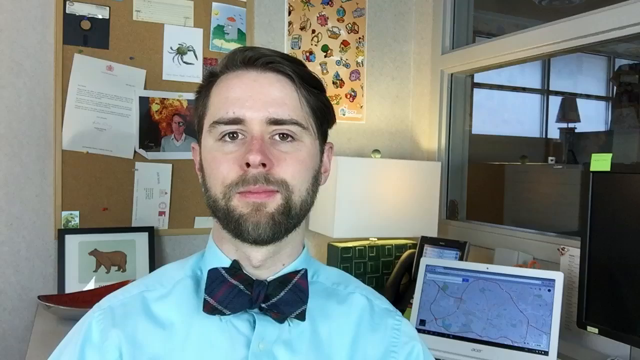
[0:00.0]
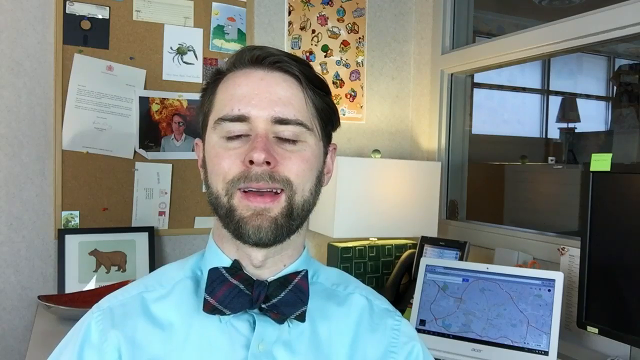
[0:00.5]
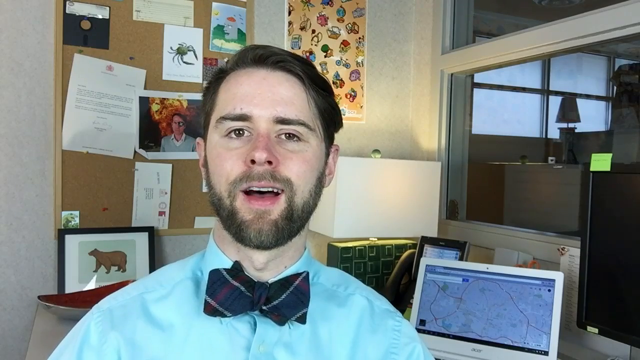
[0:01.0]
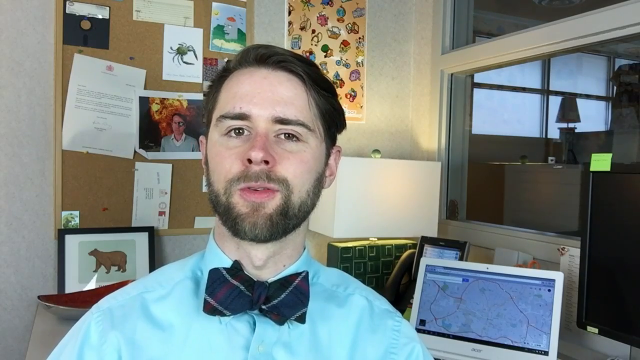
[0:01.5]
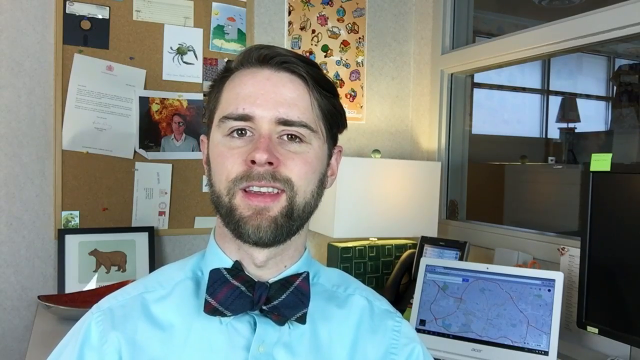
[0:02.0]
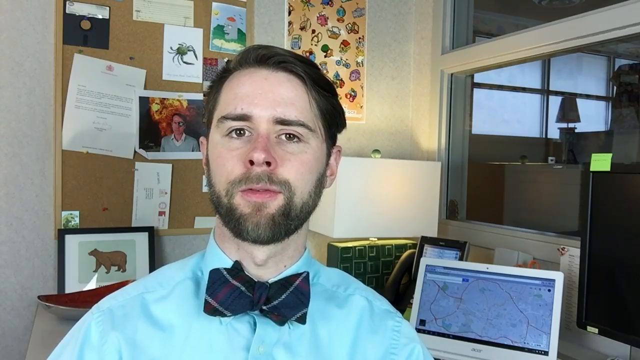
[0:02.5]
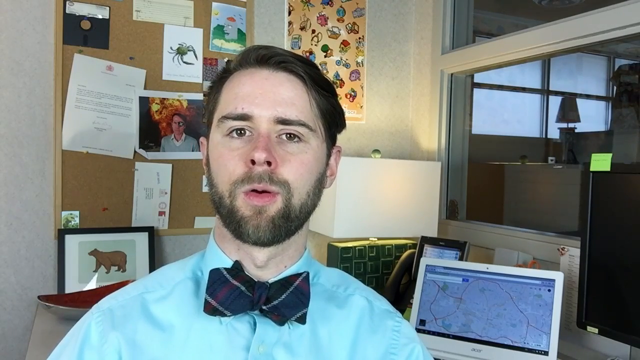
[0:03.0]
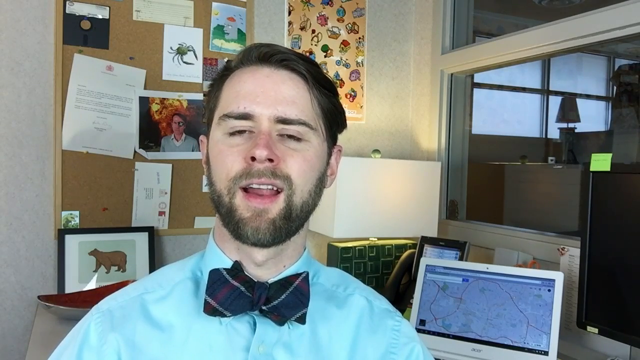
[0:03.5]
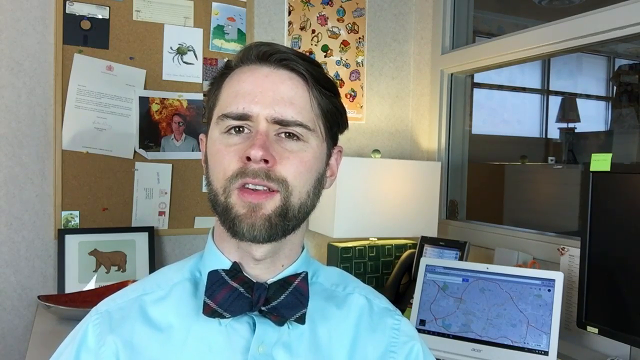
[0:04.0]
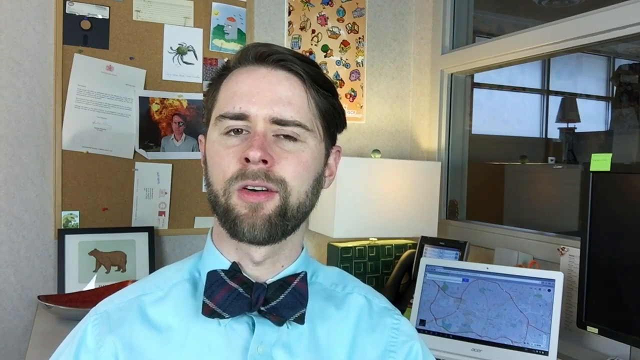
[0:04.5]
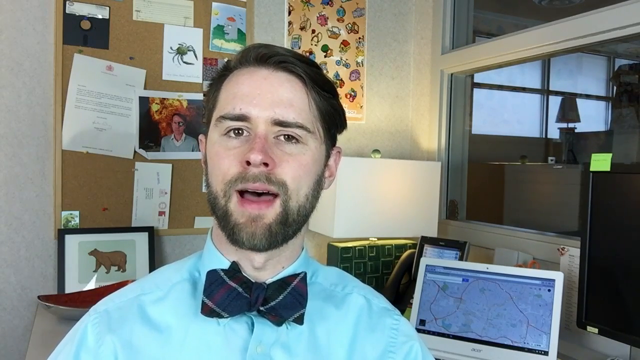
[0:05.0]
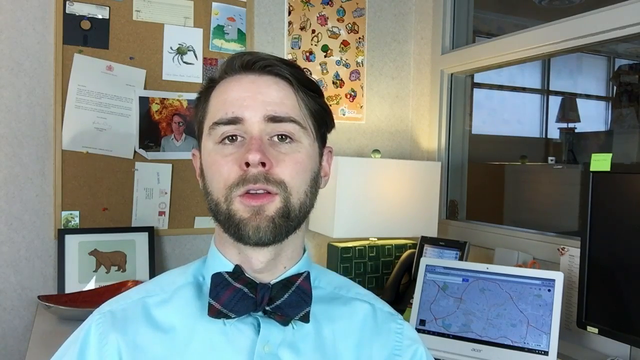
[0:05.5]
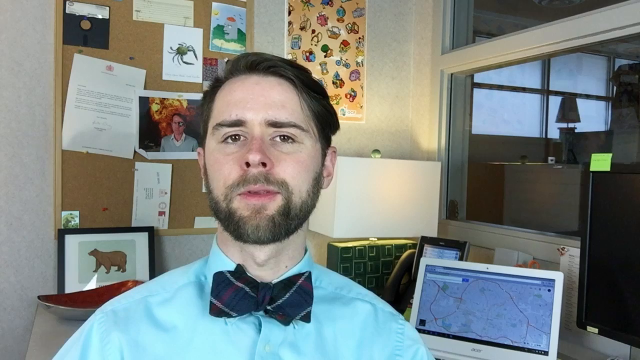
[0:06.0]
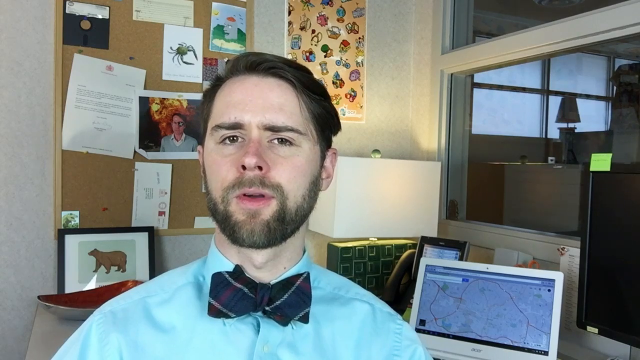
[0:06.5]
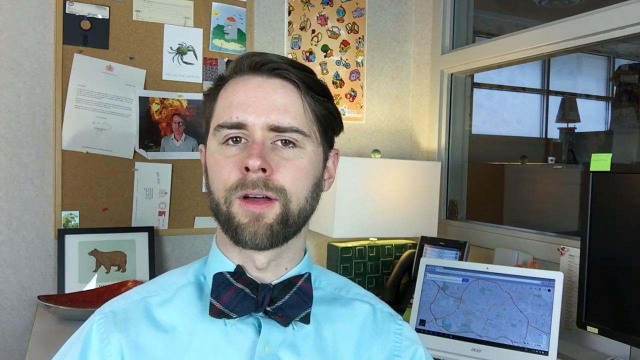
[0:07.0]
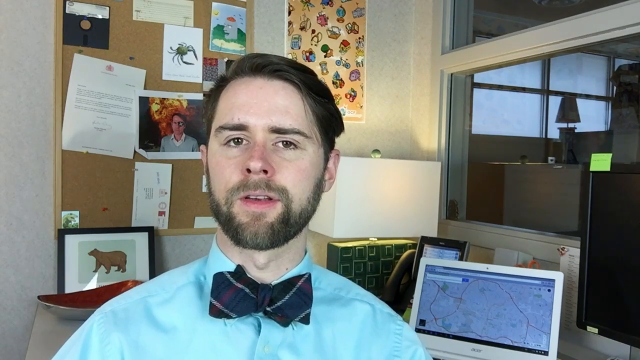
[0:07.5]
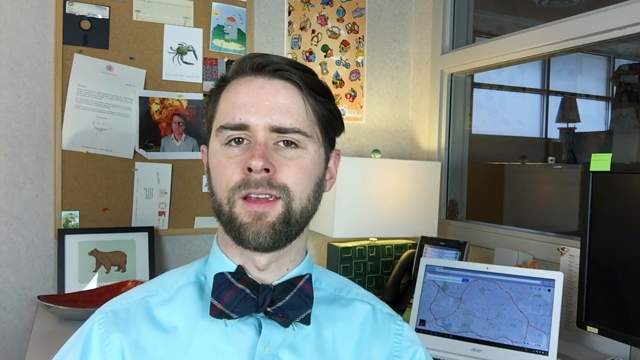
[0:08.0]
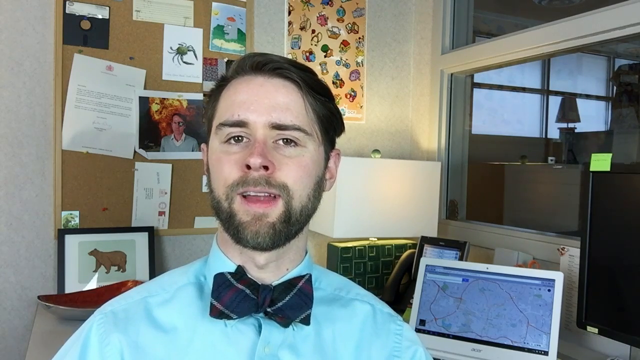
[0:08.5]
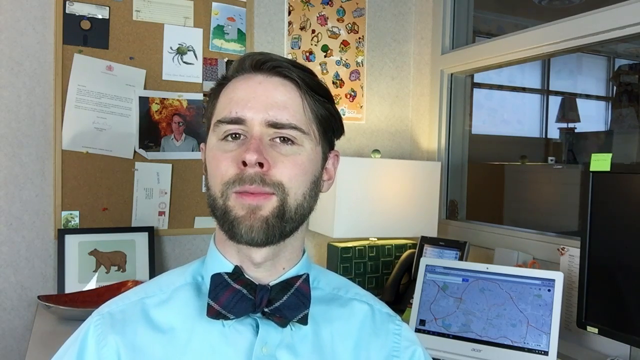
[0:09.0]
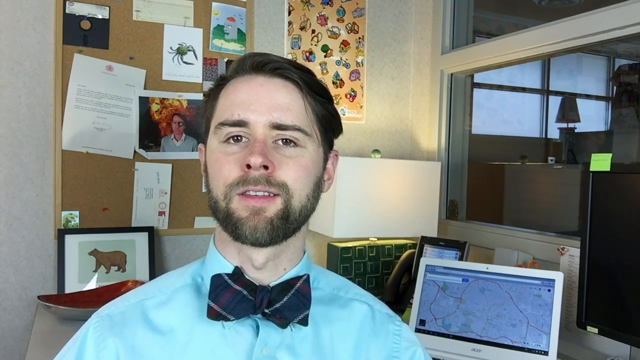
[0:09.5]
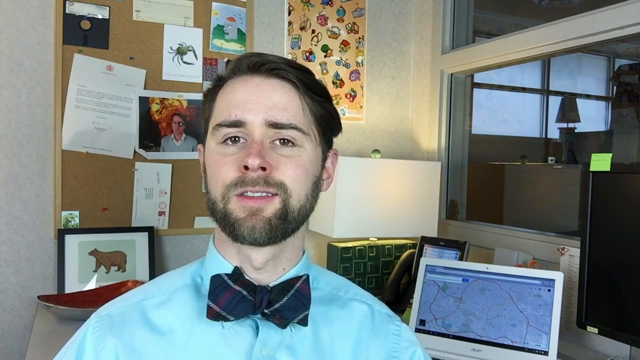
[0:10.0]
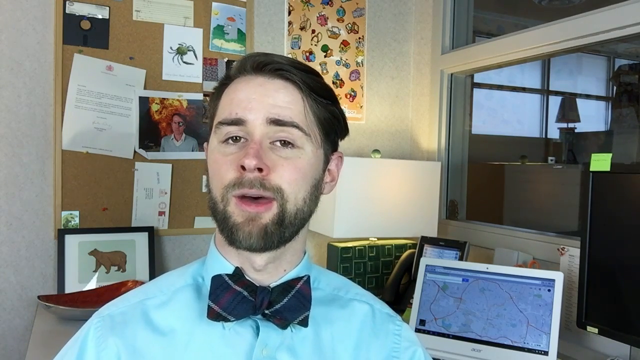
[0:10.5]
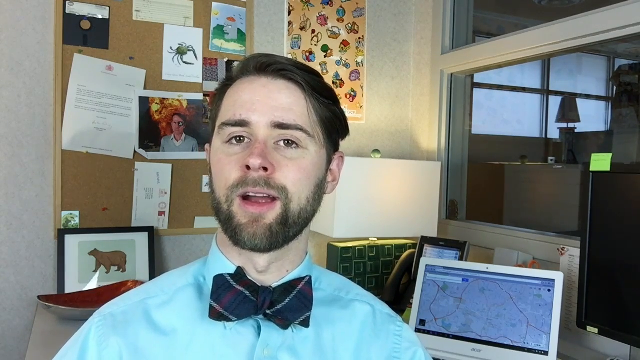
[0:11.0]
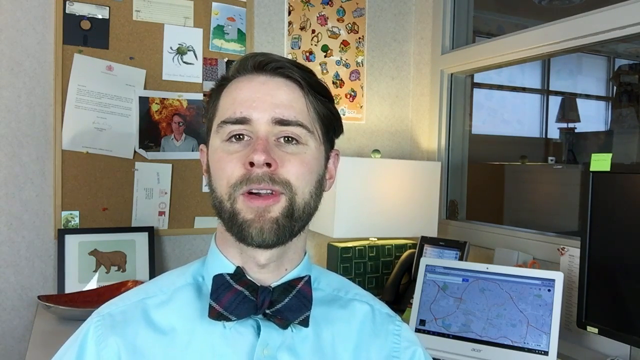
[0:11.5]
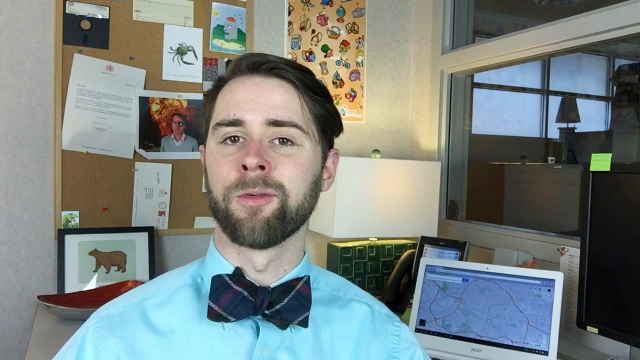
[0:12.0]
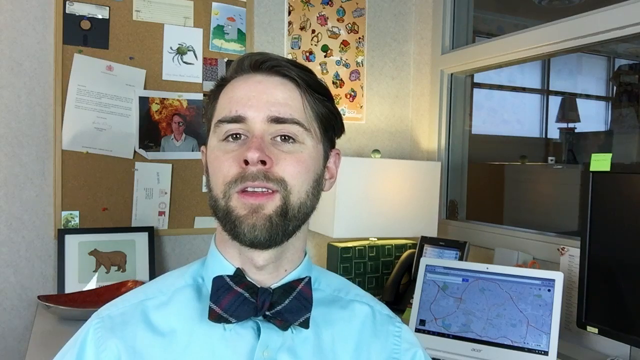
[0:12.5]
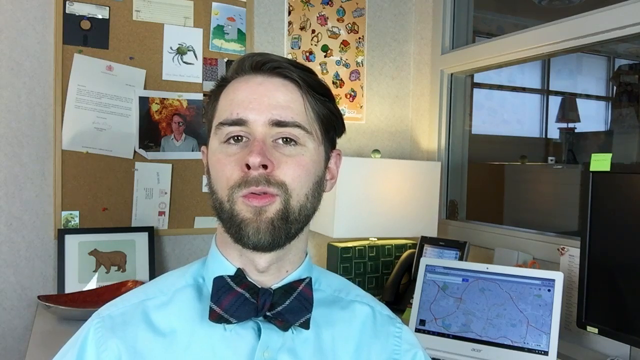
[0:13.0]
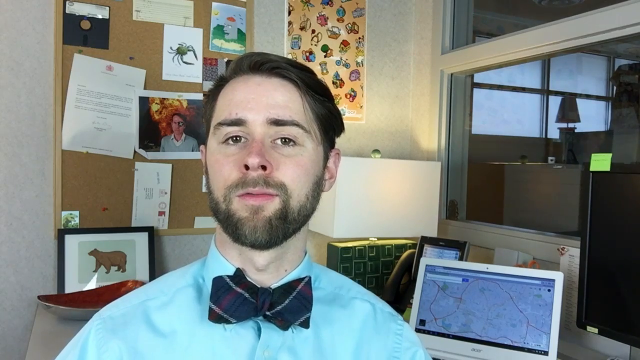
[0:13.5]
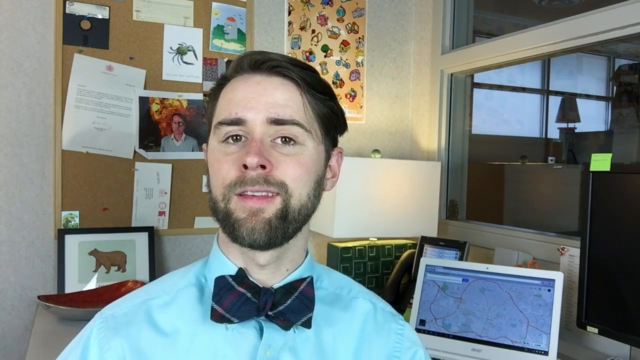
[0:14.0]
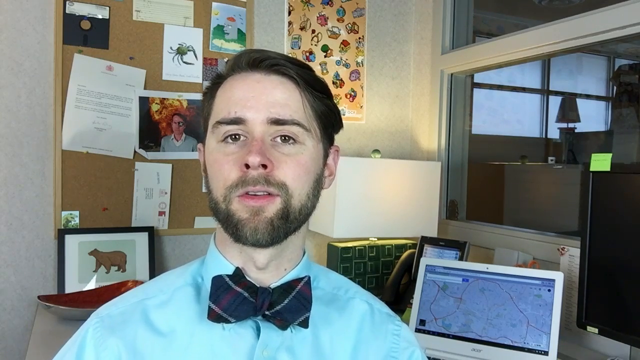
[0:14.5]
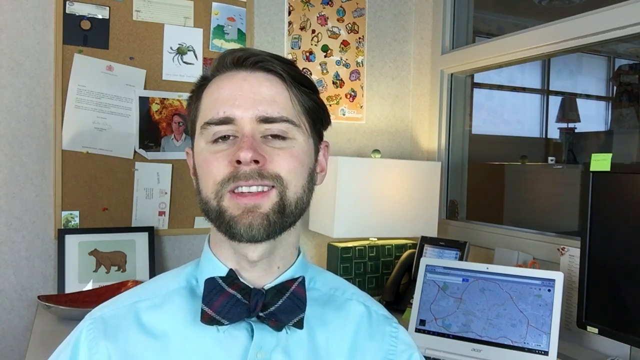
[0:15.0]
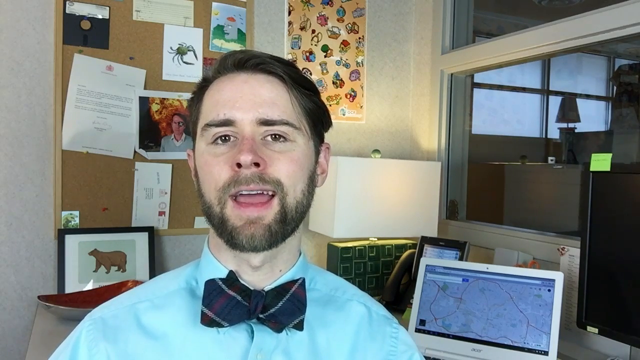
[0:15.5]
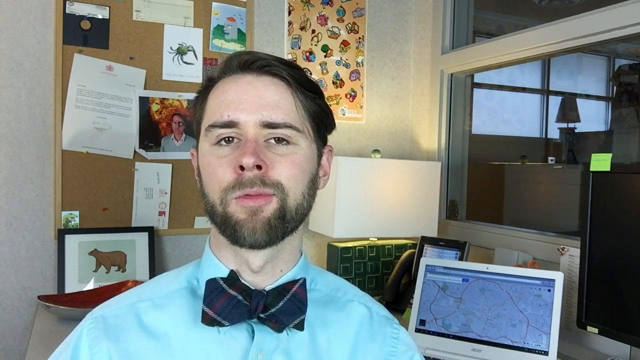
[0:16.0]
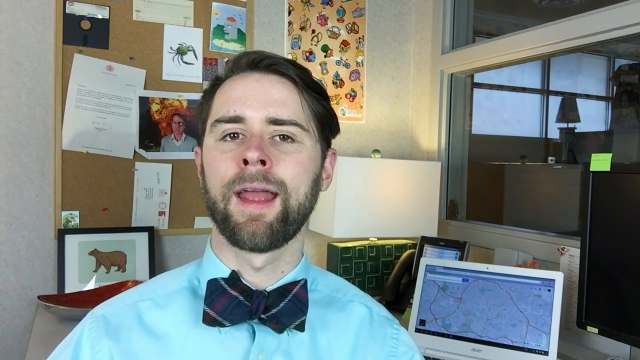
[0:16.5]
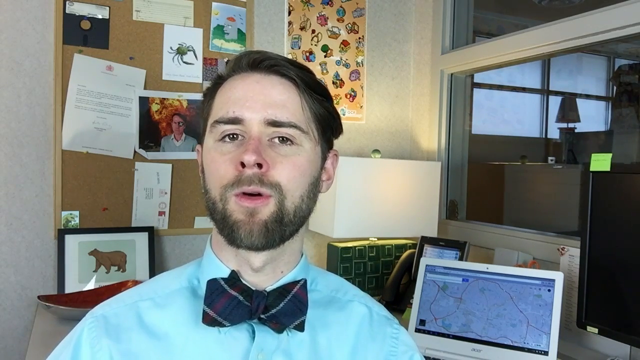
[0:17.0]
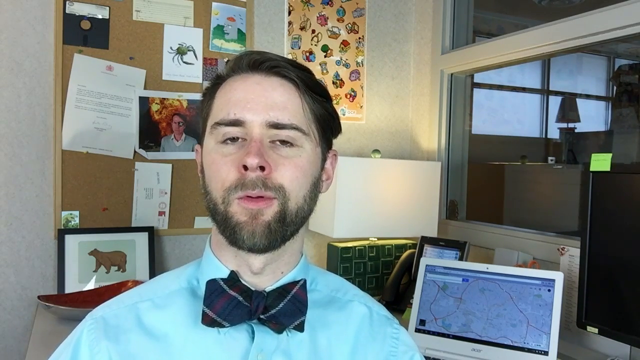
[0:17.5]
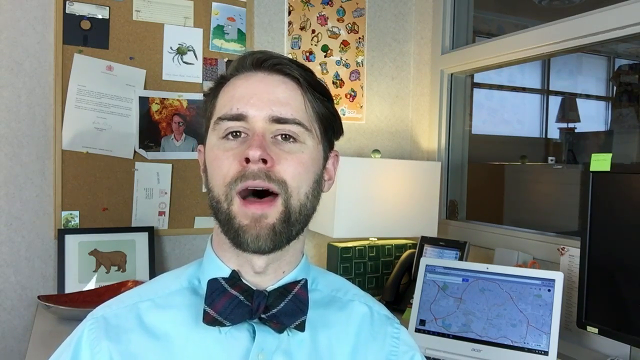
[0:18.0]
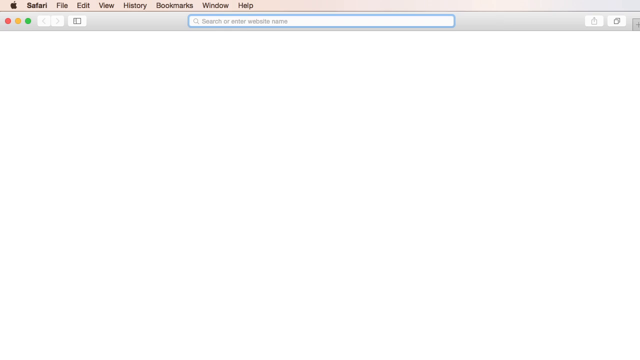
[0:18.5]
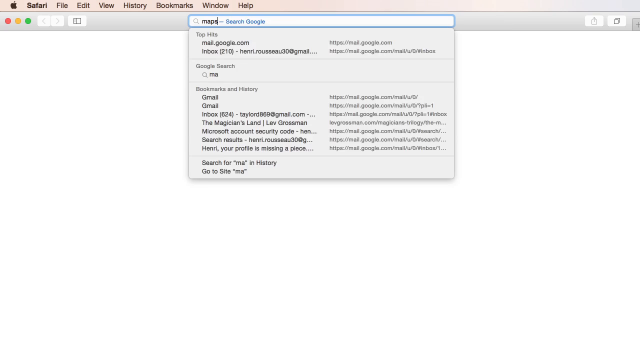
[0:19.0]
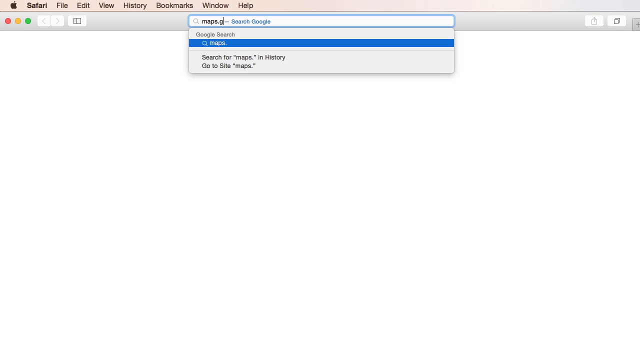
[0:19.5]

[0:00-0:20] A man sits at a desk. He wears a blue shirt and a black bowtie with white stripes, and has black hair and a neatly groomed beard. Behind him is a bulletin board with various documents and photos pinned to it, along with a lamp. A computer monitor is behind him and to his right, as is a window reflecting the inside of the office. Smiling with a jovial expression, he speaks to the viewer, not moving other than speaking. The video then cuts to a screencast of a Safari web browser, where maps.google.com is typed into the address bar.